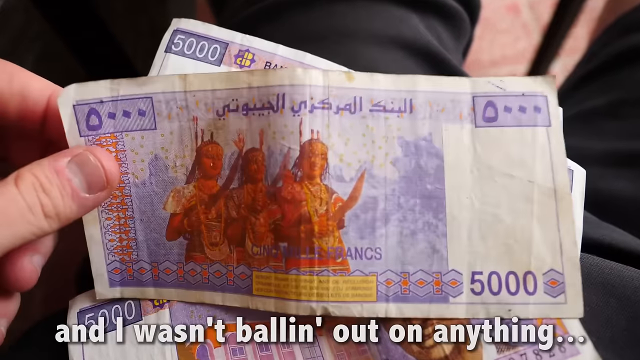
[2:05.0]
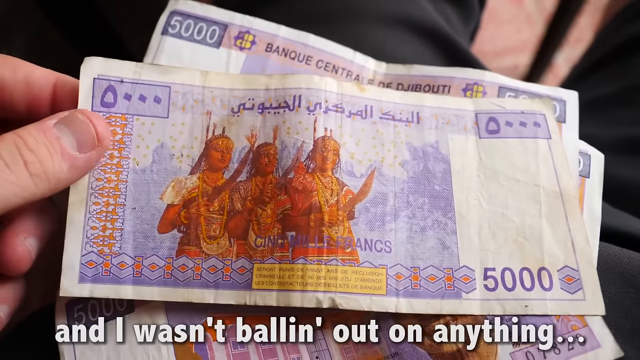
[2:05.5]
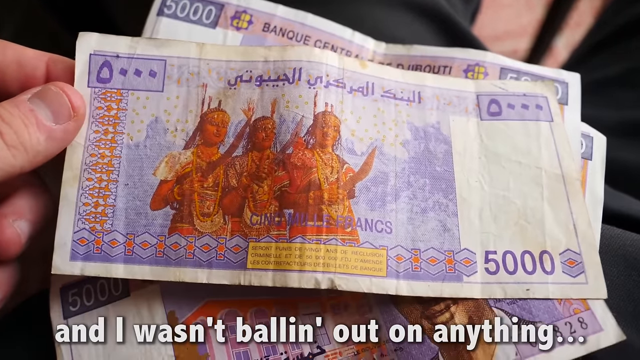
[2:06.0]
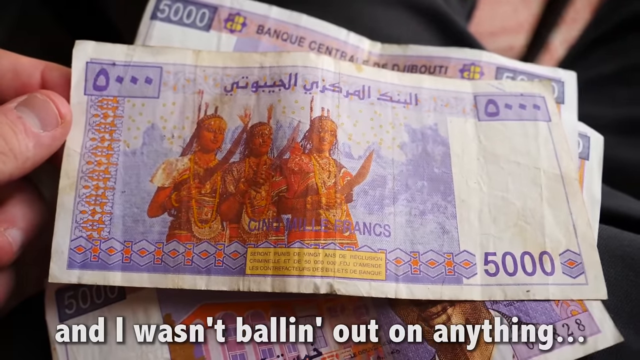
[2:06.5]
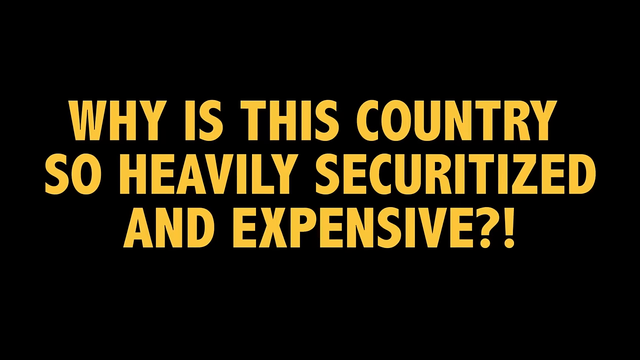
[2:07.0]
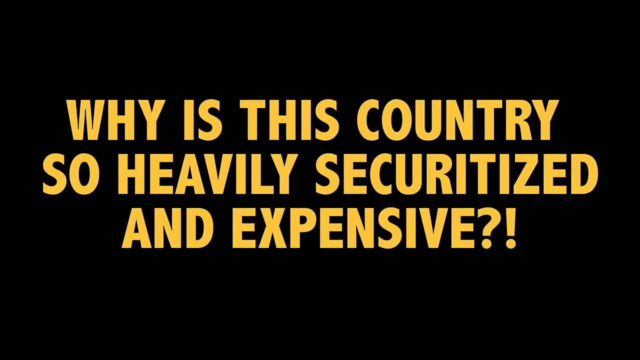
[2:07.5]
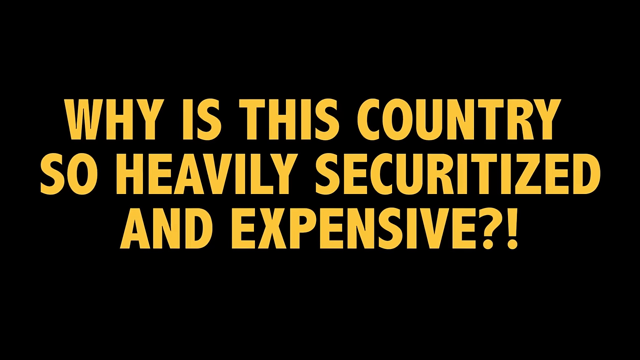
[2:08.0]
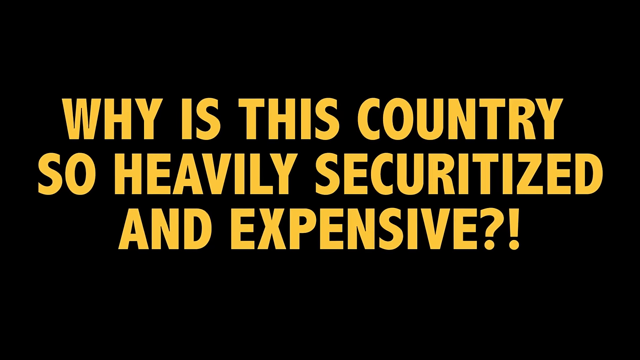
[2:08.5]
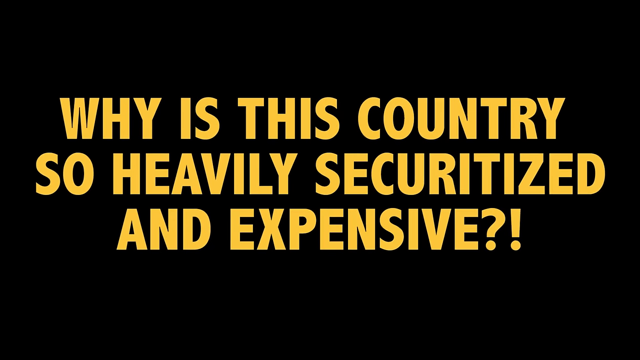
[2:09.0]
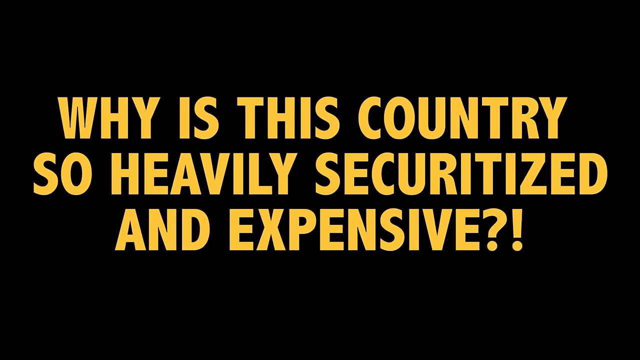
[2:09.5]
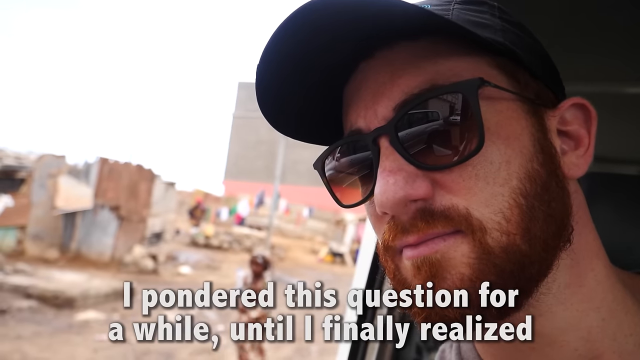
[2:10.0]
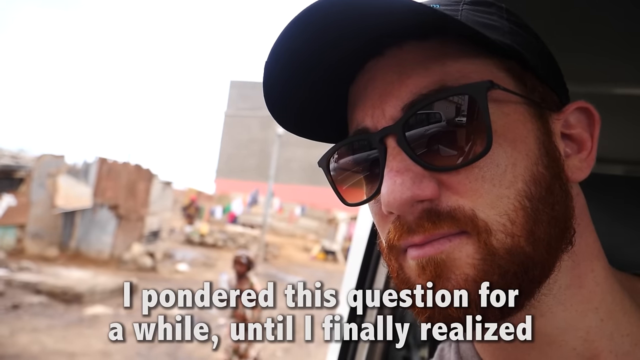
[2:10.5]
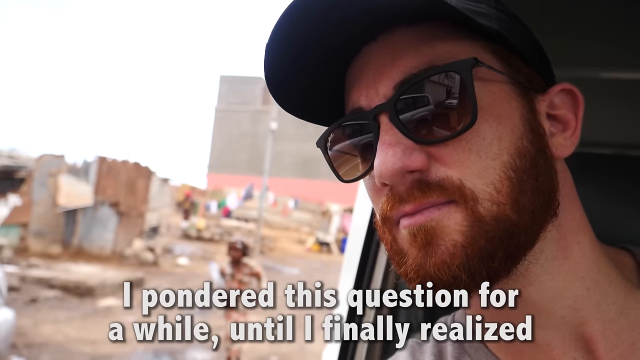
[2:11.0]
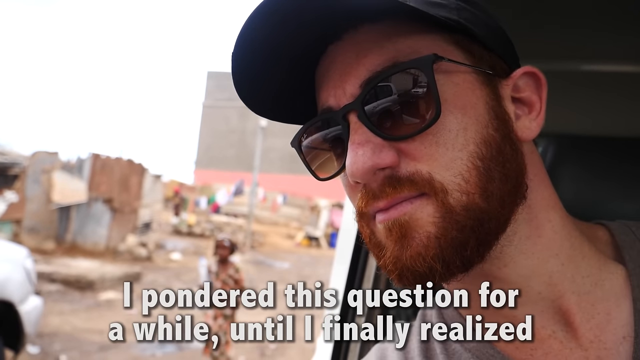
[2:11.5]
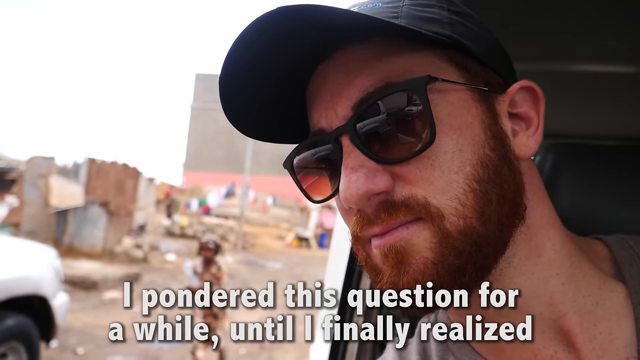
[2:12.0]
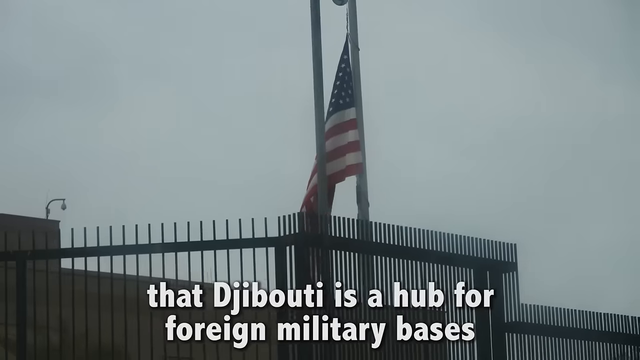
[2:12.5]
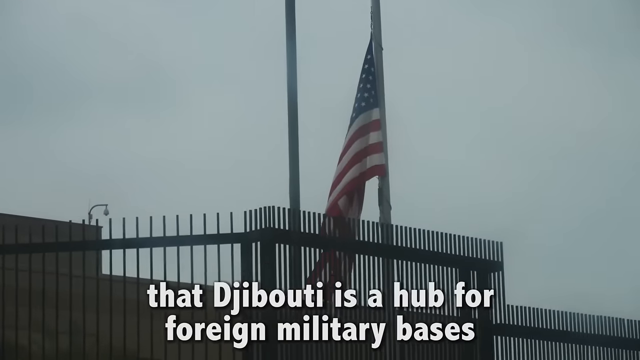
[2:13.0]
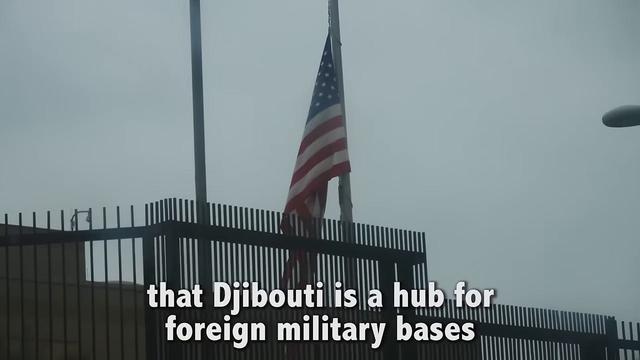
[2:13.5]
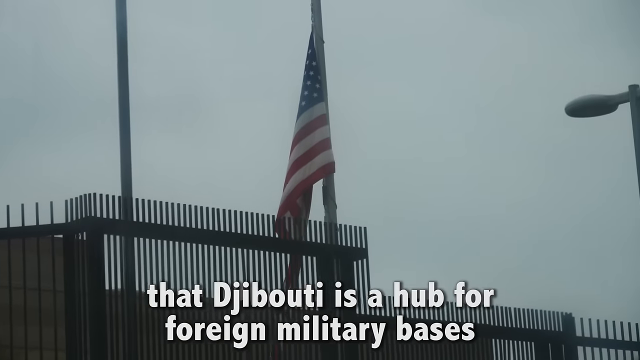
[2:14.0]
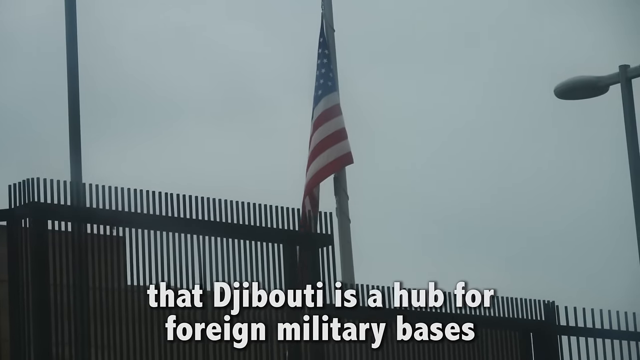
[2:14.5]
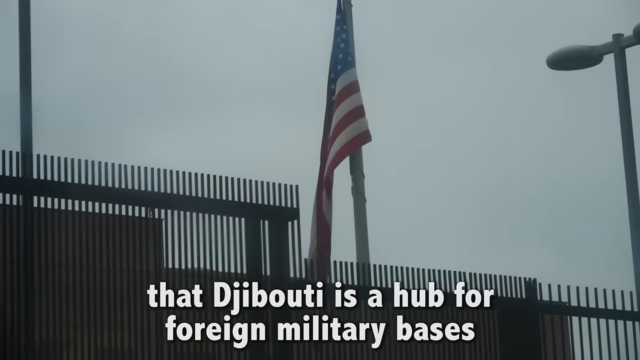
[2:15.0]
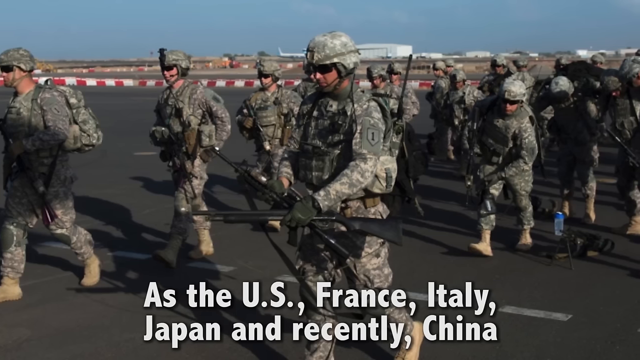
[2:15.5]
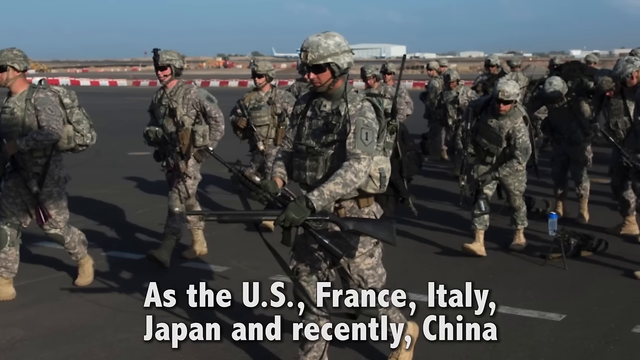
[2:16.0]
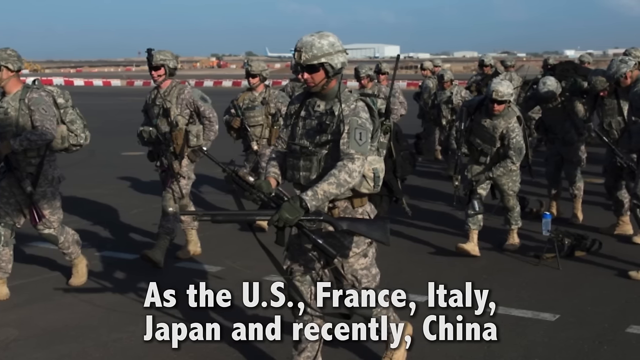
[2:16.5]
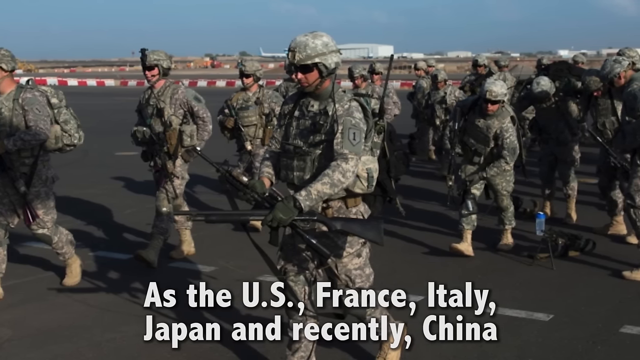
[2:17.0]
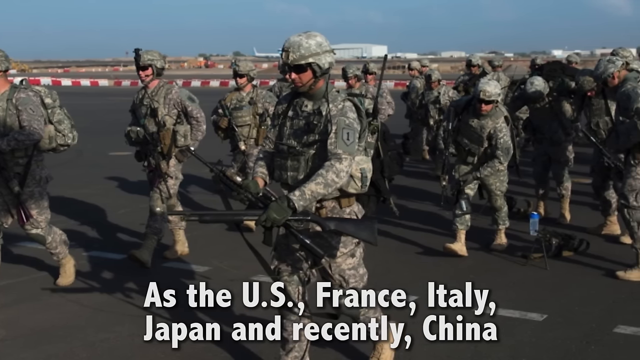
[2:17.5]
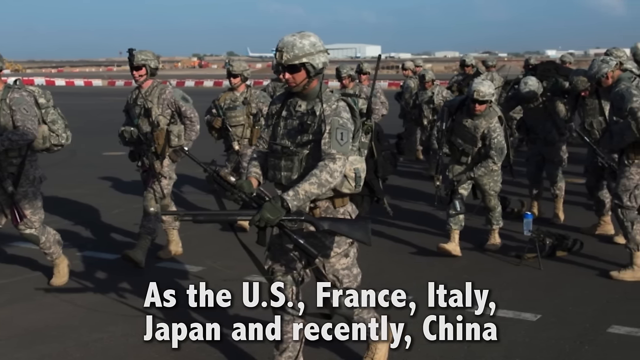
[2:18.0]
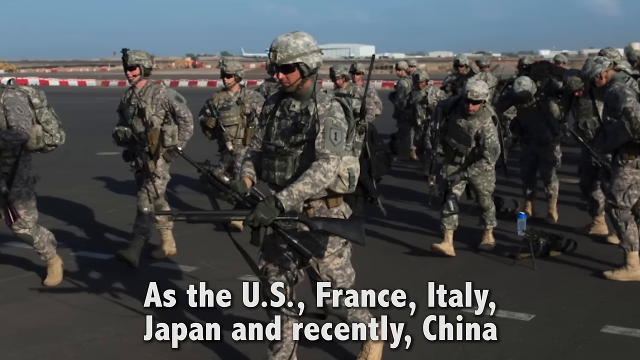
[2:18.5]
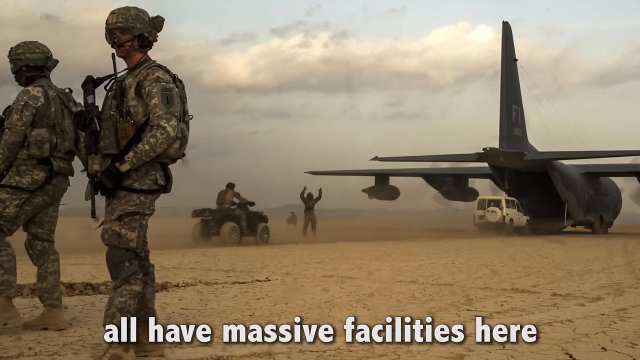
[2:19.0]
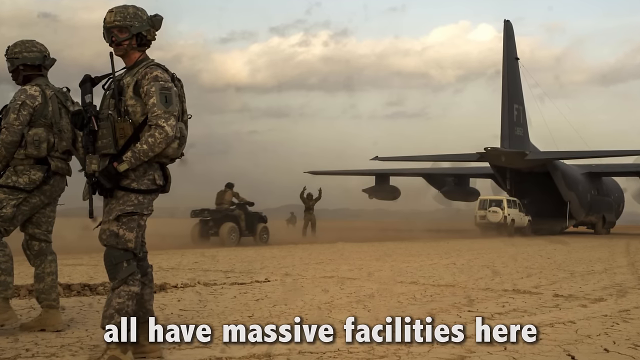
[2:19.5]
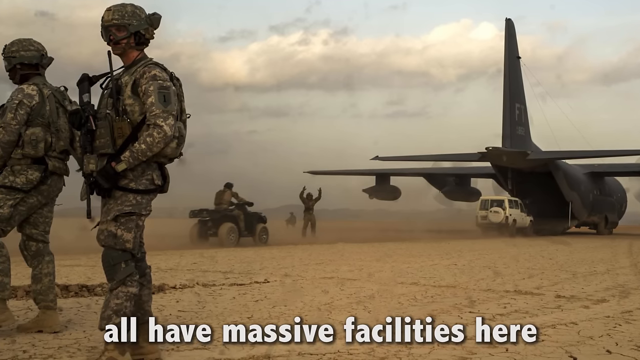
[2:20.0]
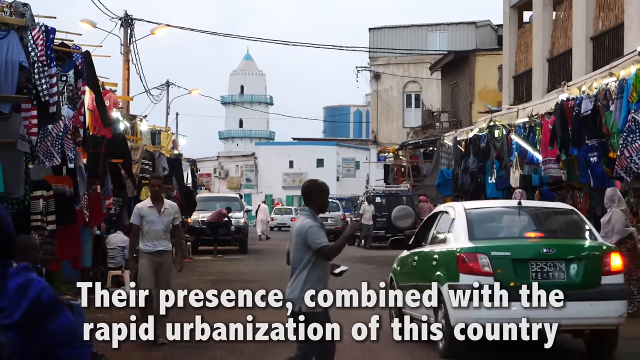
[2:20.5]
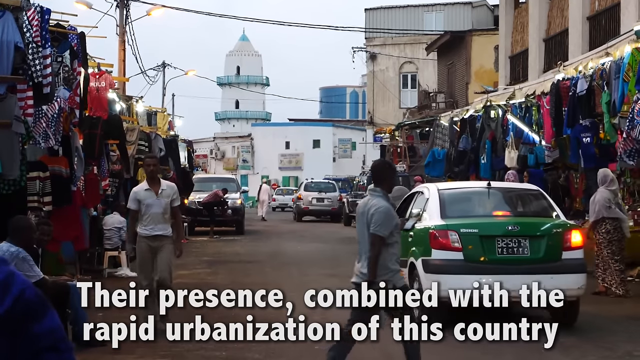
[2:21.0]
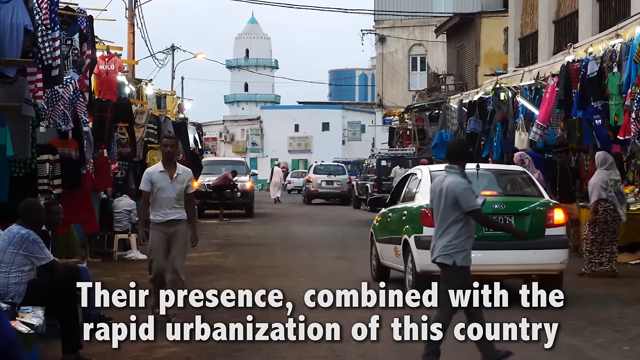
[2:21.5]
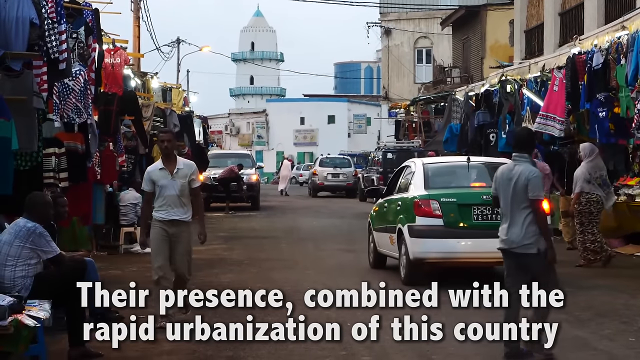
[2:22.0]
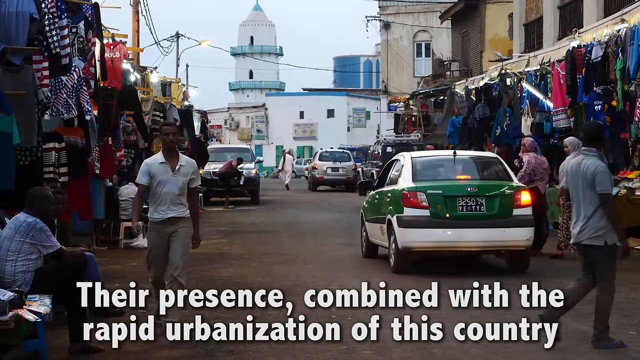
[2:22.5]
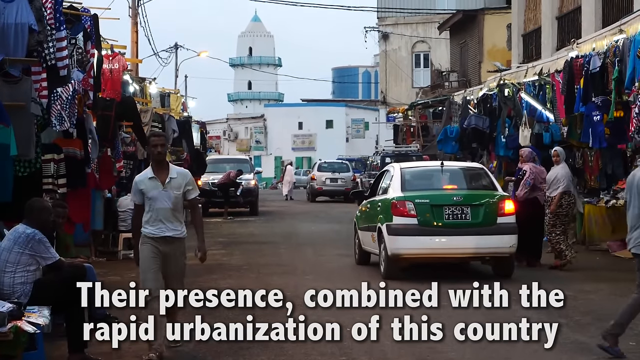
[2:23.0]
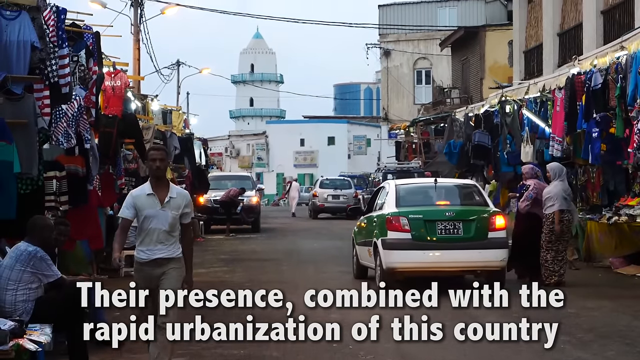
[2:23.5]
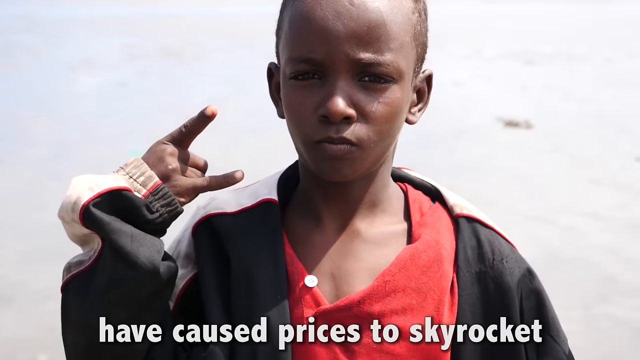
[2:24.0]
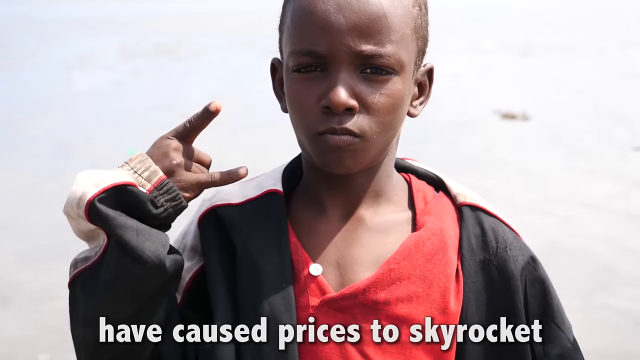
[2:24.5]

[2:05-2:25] Text reads "I pondered this question for a while until I realized" Djibouti "is the hub for foreign military bases as the U.S., France, Italy, Japan, and recently China all have massive facilities there," and says urbanization has caused prices to skyrocket. He rides down the road with his head poked out of a vehicle while a child runs beside it. Heavily armed military people are everywhere. Pictures of the money are shown, as are some local children. An American flag is visible. At the airport there is a great deal of military. Then they walk down a heavily populated street, with cars going up the street and people walking.